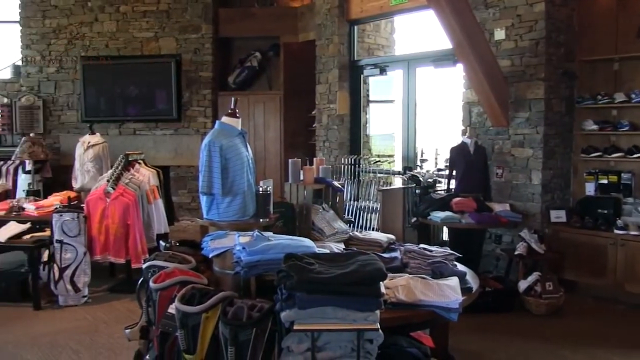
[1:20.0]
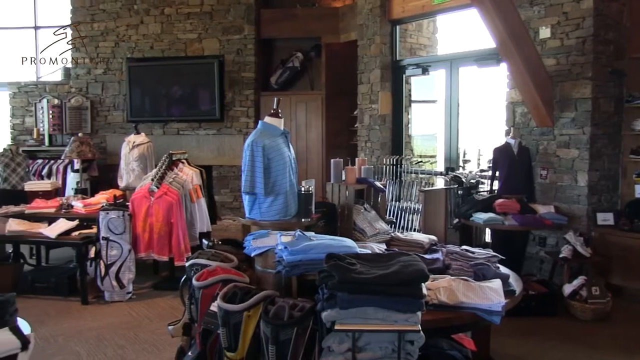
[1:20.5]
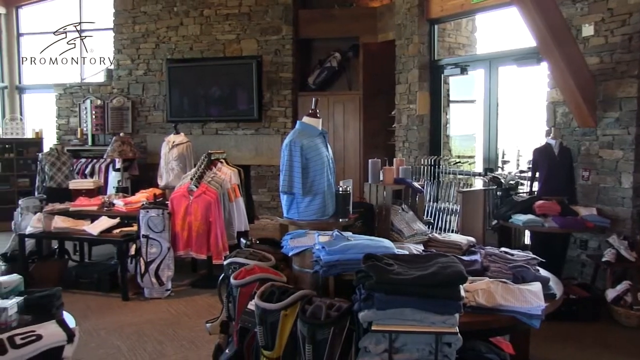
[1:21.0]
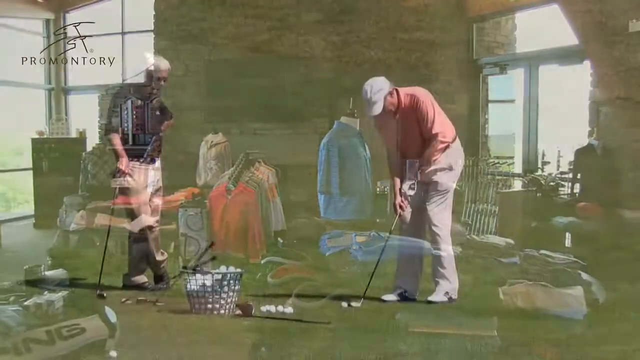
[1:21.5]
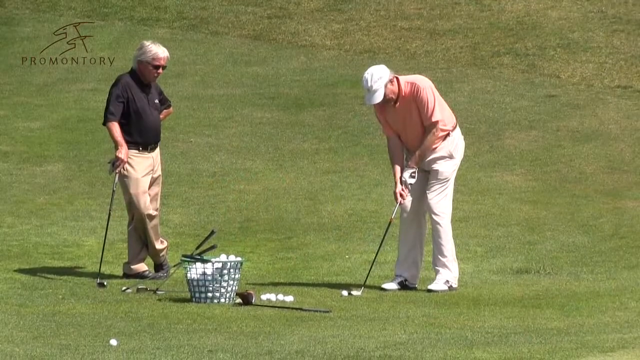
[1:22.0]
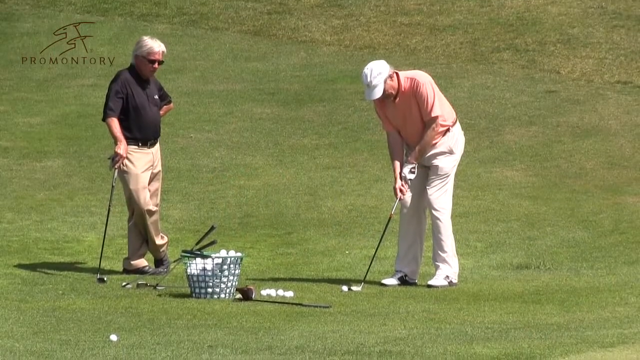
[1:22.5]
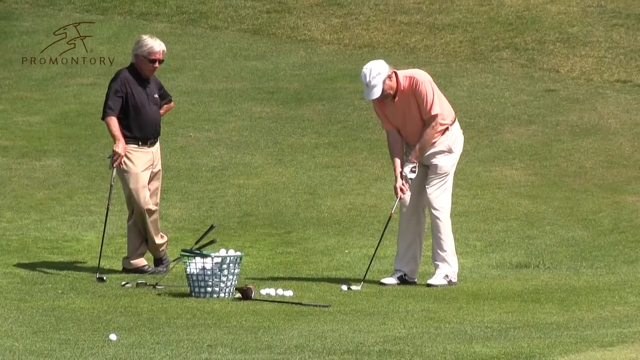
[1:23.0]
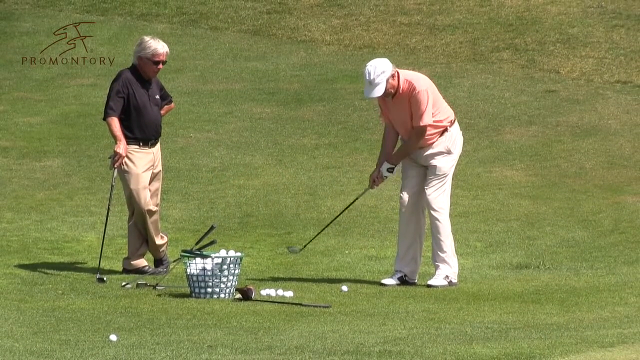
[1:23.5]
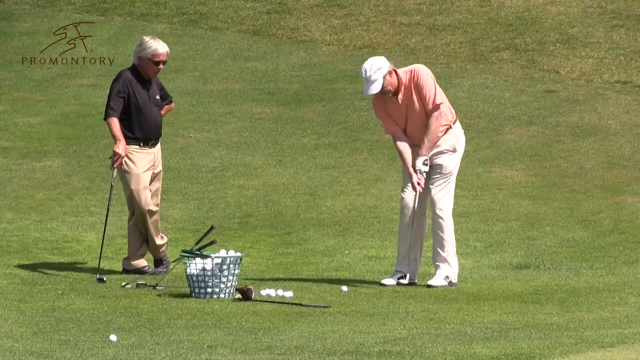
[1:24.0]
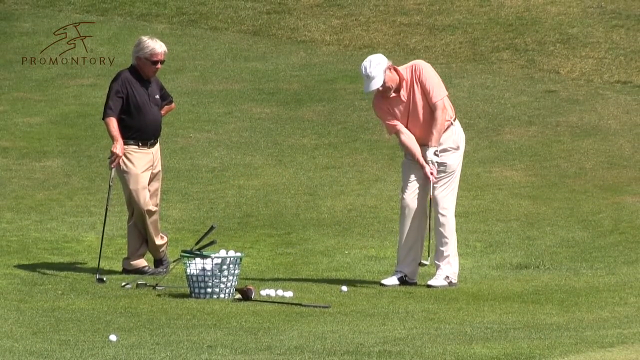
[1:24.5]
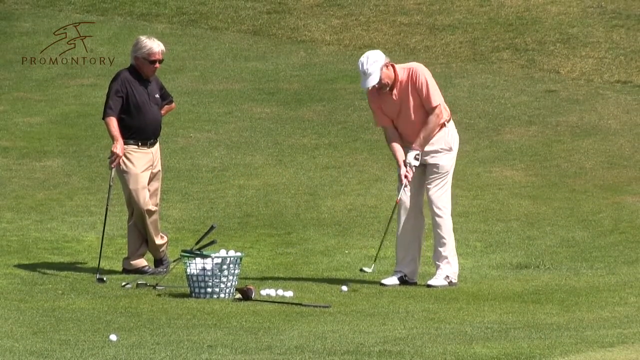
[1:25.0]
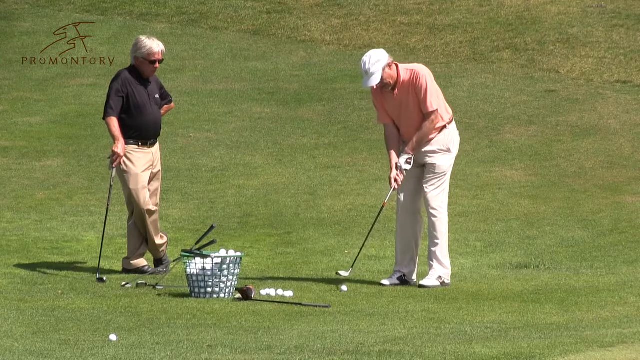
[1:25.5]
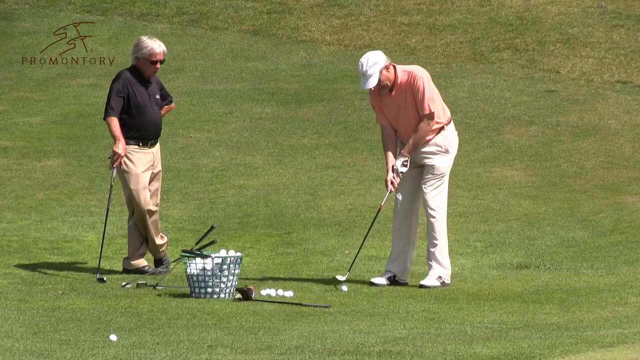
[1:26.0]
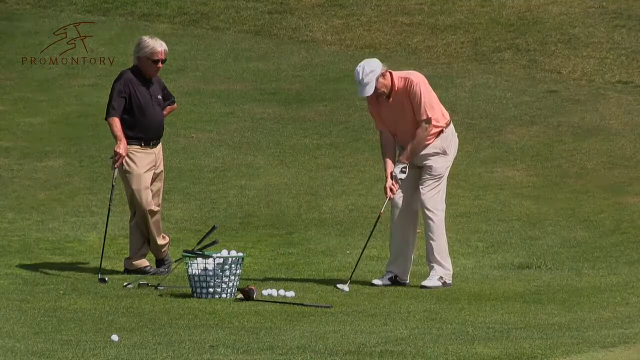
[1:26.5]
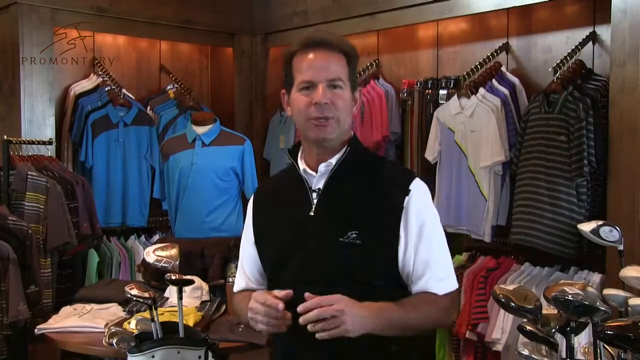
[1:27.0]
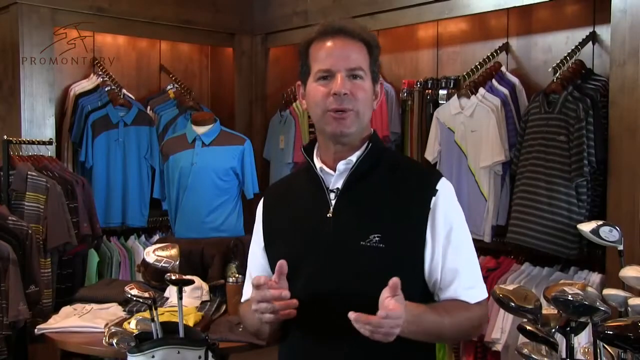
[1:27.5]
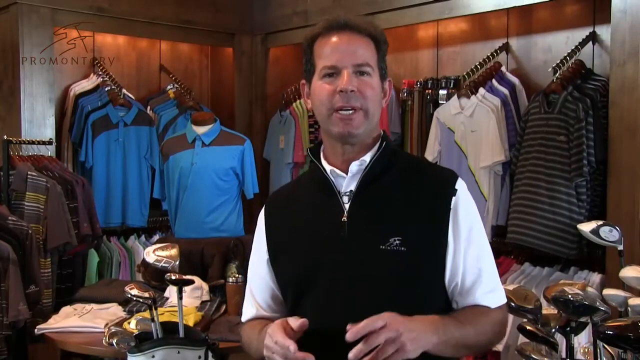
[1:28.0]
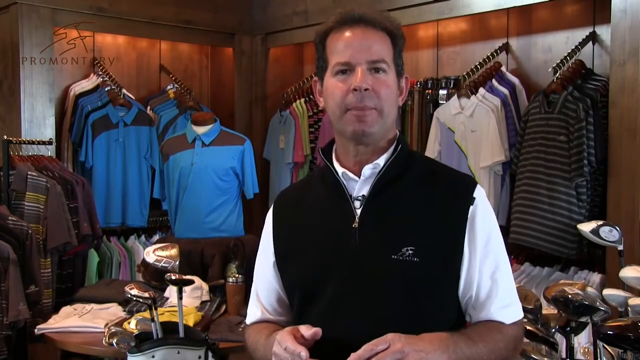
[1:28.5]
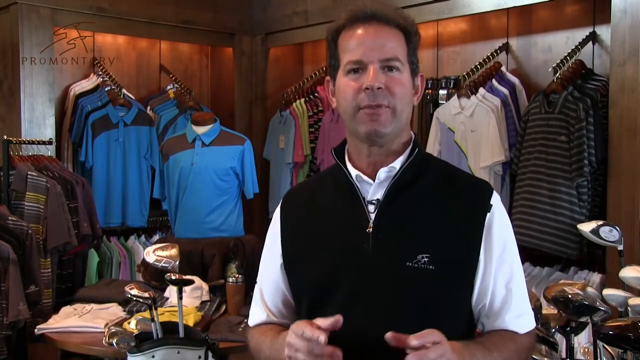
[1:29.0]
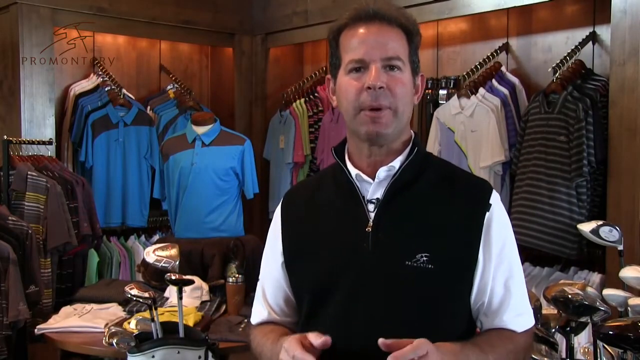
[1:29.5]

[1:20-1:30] A view of the gift shop shows large brick walls, some wooden pillars, and doors that gleam to the outside. A variety of golf shoes are on display on wooden shelves against the wall, along with what looks to be golf socks. In the foreground is a round table with a polo shirt on display and many different sizes and styles folded on it. The tops of golf clubs and golf bags for sale are visible. In the background are jackets for sale and a framed television above the fireplace, and several tables hold more items for sale. Next, two men are golfing on the green: one wears khaki pants and a mango-colored polo, the other a black polo and khaki pants. A basket of balls is in front of them and several golf clubs surround them, and the man takes a gentle practice swing. The man in the gift shop appears again, talking with his hands and gesturing to the viewer.